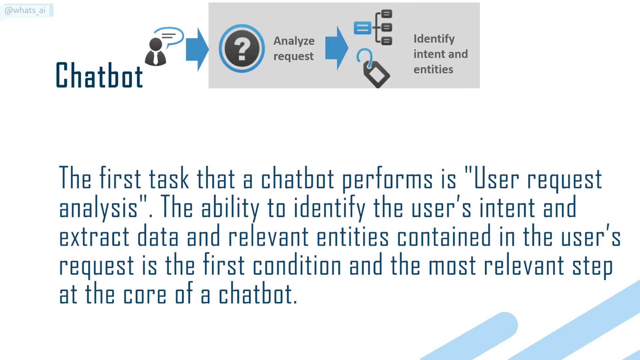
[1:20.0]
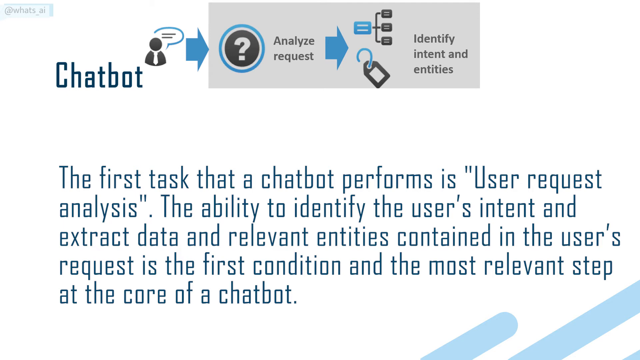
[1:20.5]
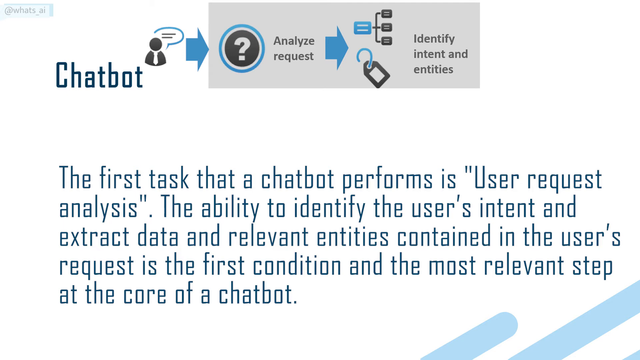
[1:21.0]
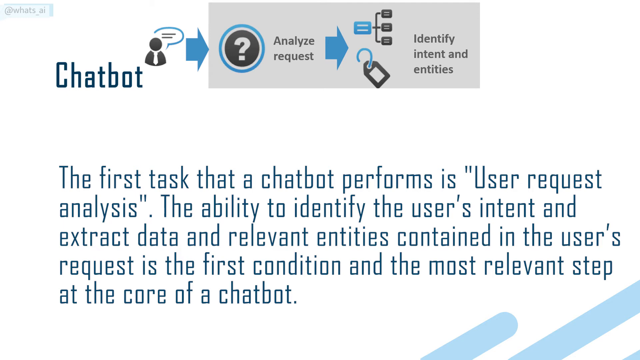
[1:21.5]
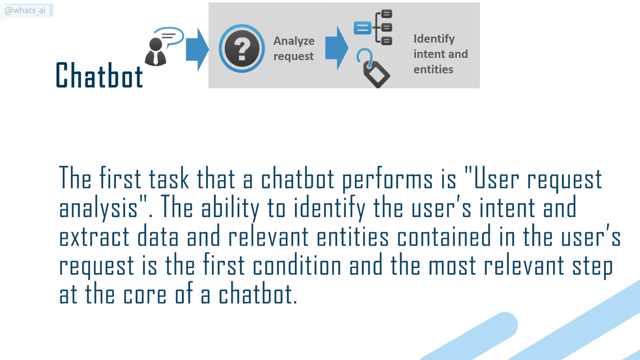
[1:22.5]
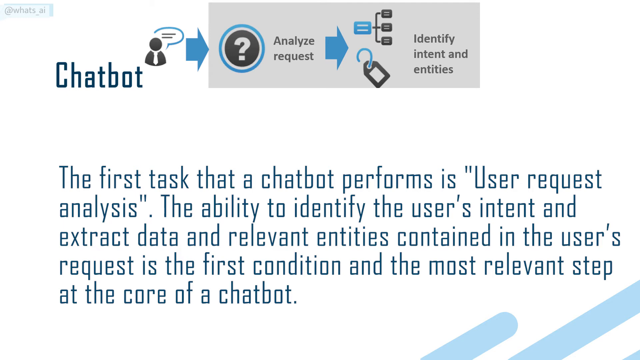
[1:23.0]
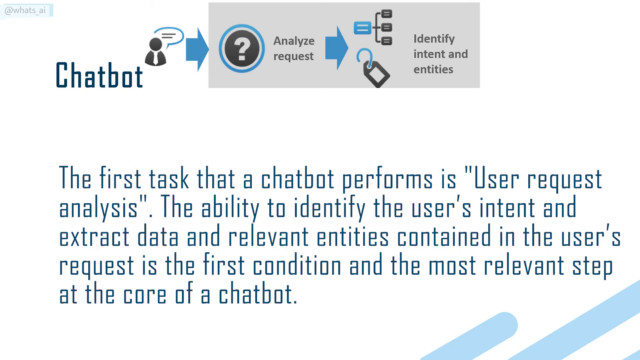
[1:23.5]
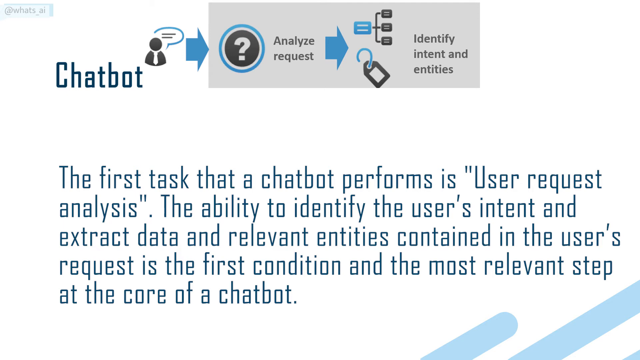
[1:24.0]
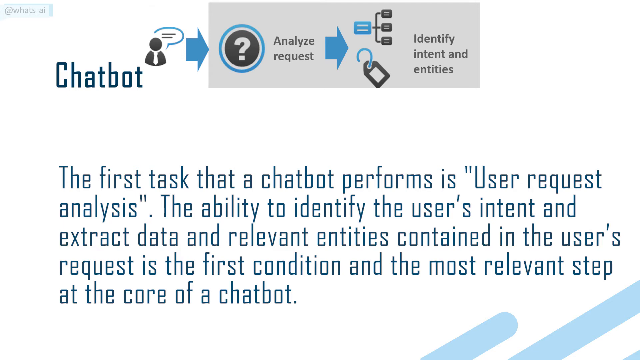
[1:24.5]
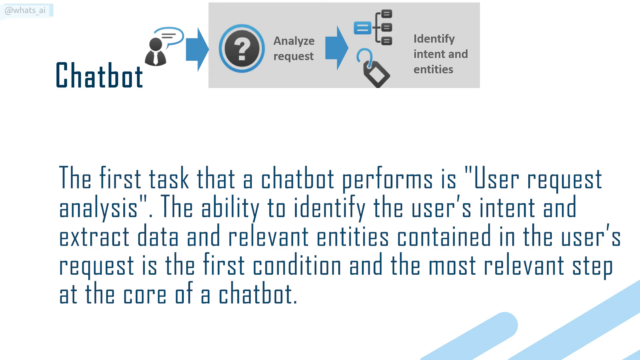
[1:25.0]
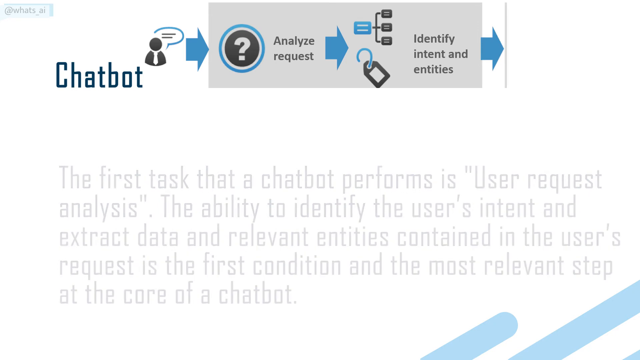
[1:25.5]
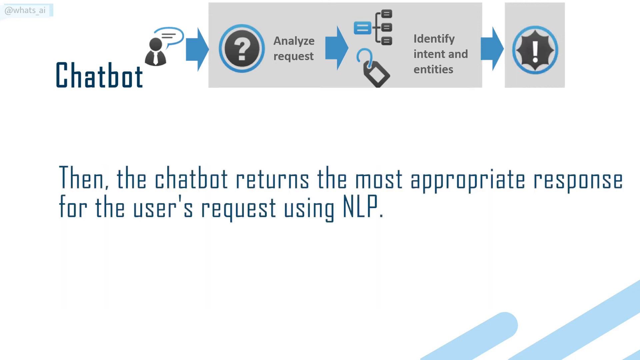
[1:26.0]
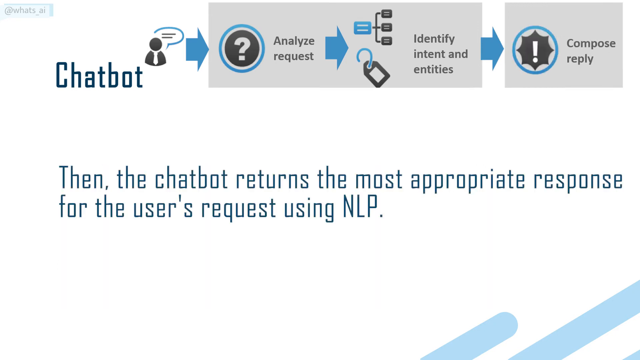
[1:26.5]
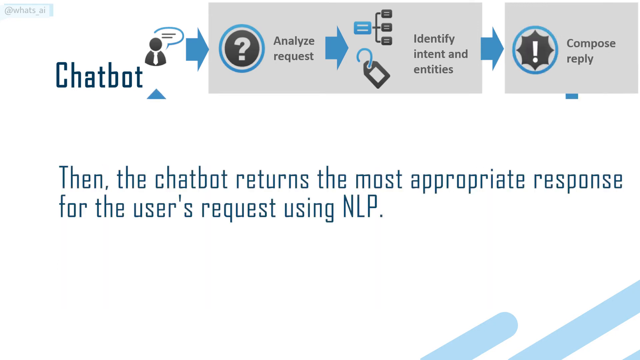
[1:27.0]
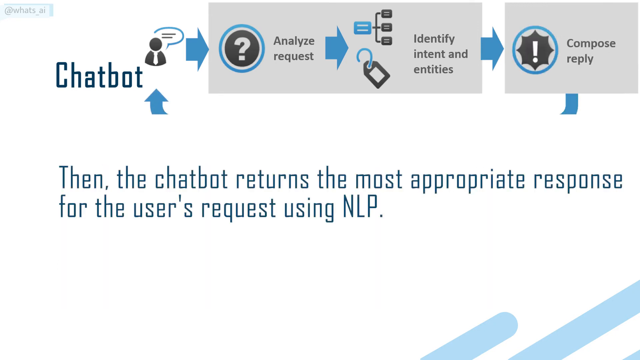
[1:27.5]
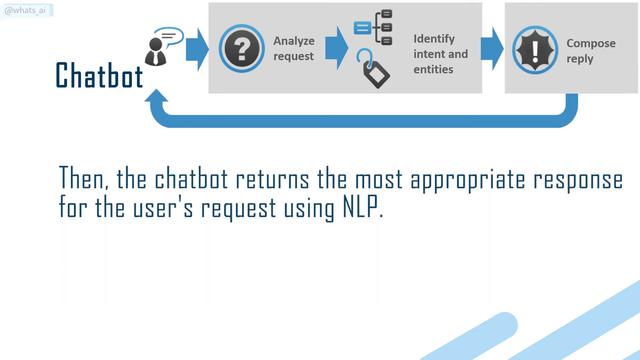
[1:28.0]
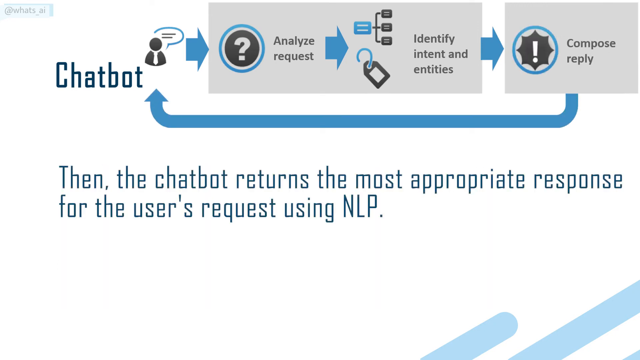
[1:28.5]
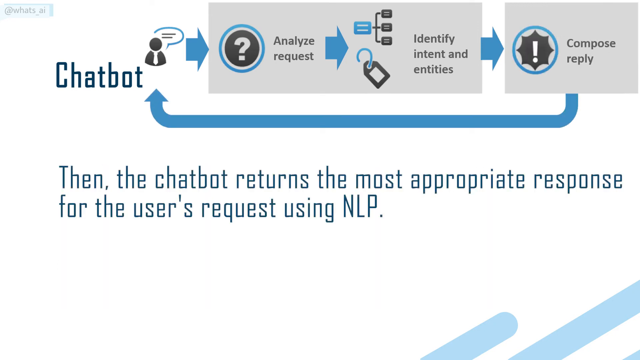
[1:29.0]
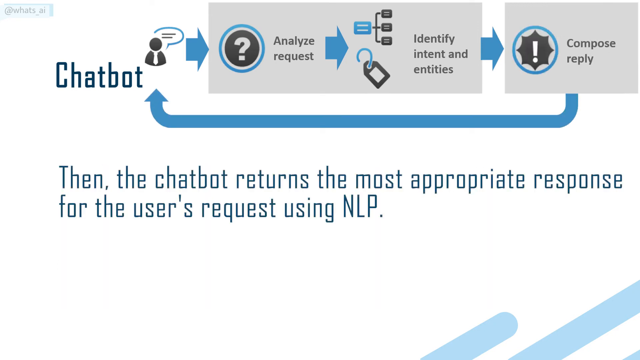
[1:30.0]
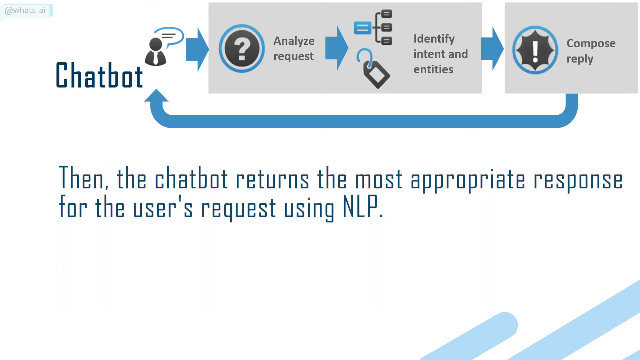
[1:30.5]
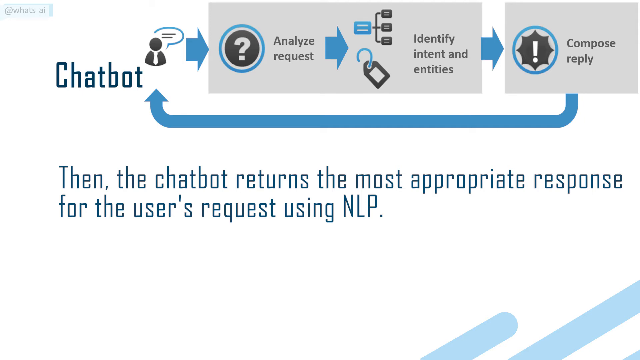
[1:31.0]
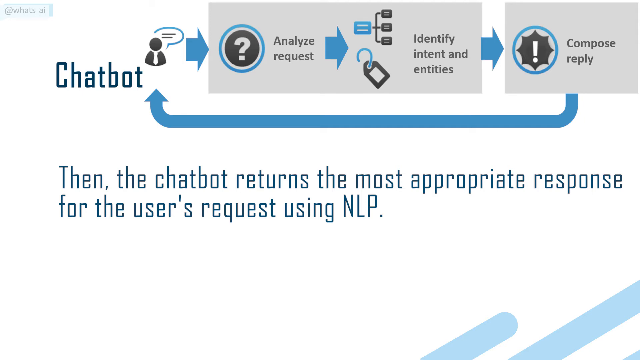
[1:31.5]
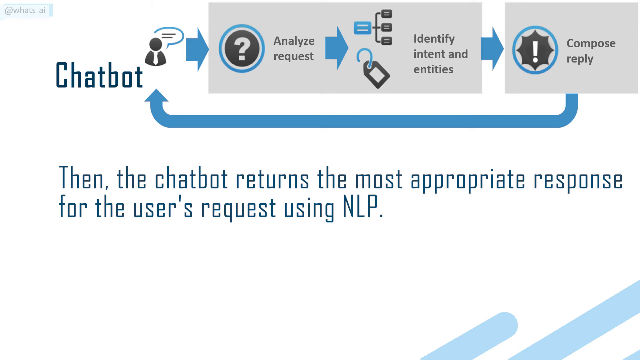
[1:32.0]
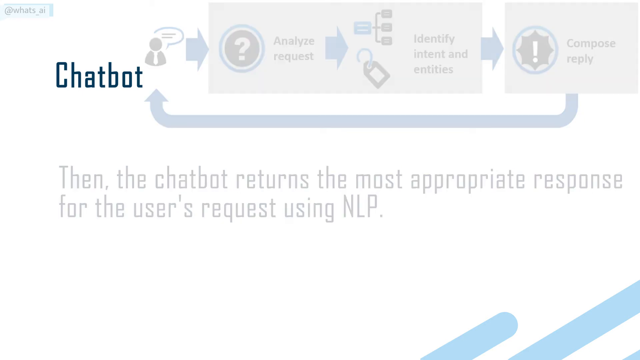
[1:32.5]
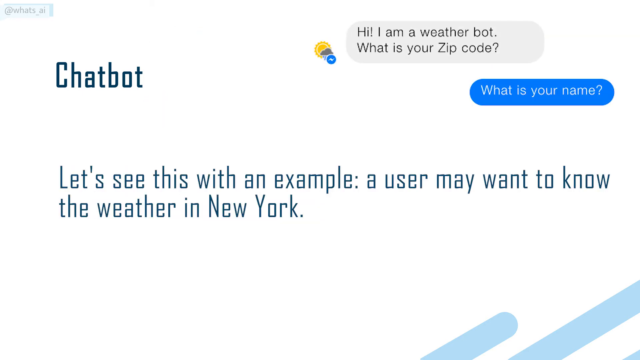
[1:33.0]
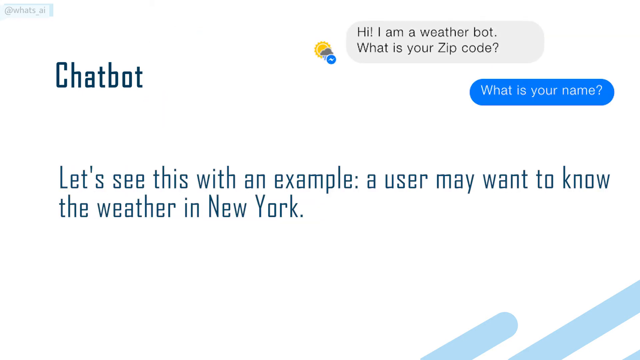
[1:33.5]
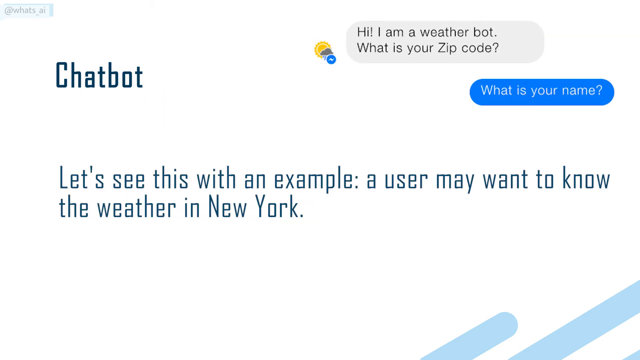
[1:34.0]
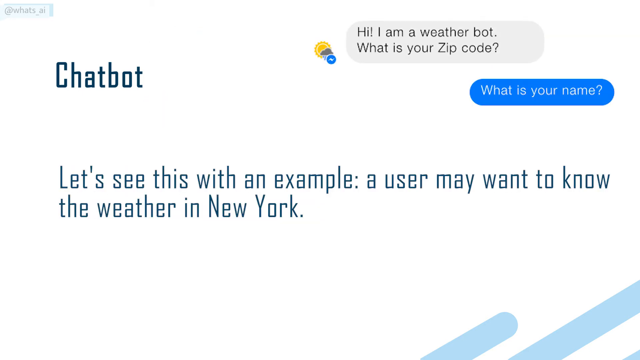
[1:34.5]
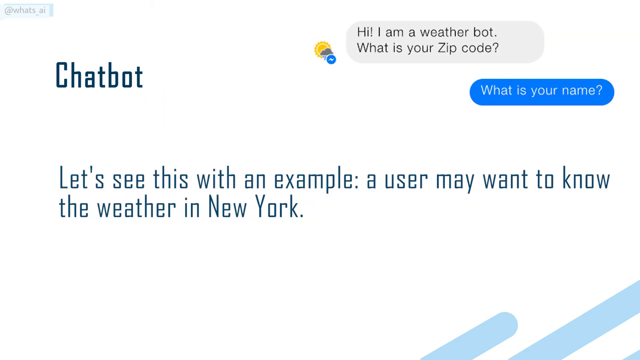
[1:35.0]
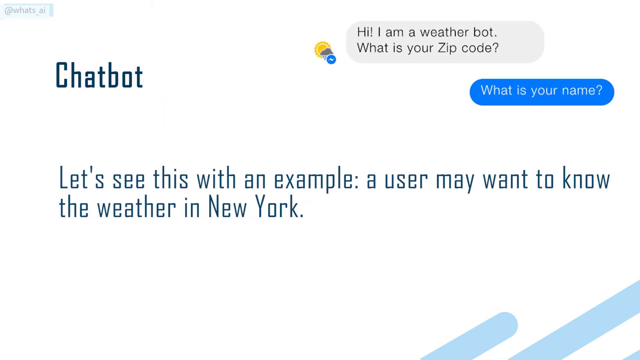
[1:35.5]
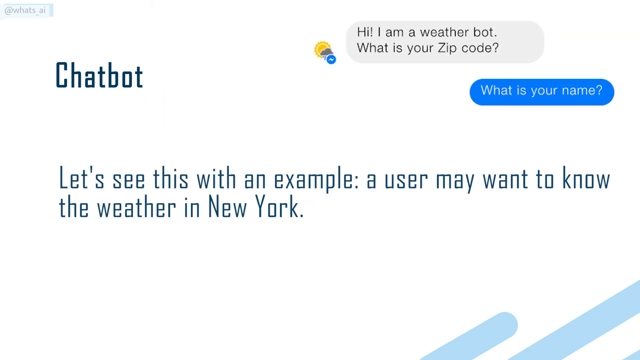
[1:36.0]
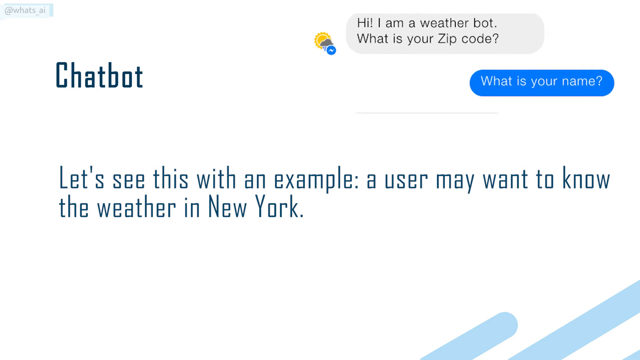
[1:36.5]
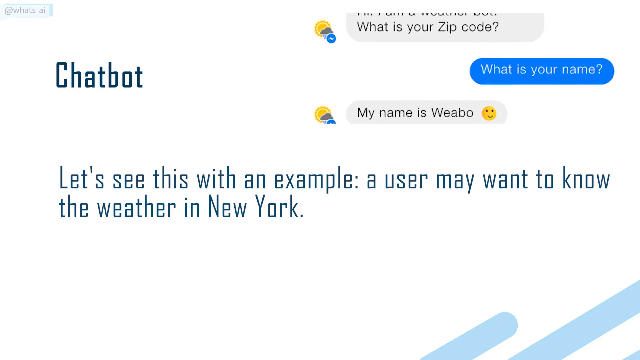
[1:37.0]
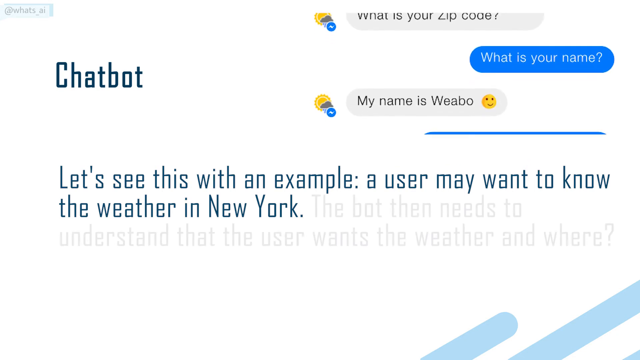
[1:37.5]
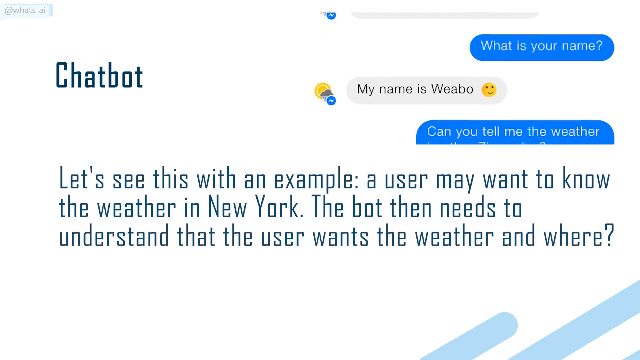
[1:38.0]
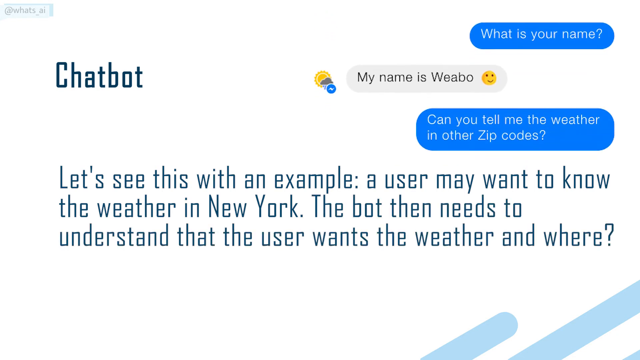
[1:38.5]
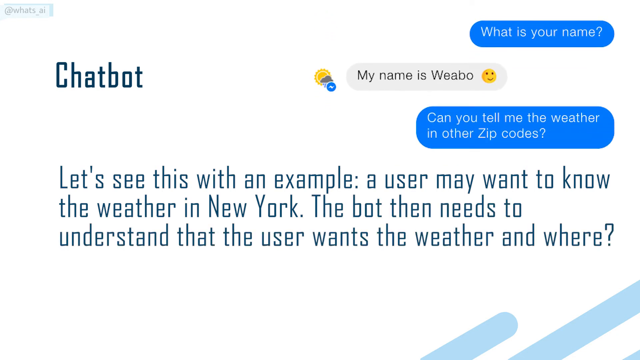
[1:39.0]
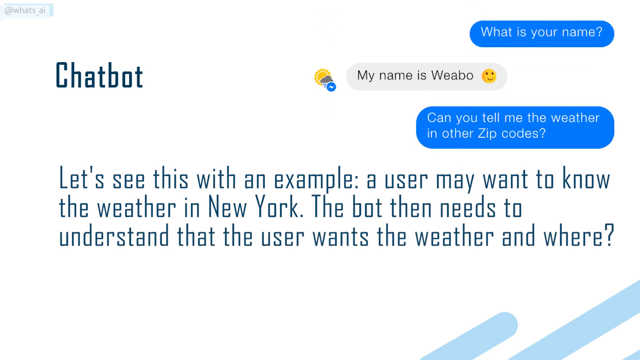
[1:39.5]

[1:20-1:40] A diagram is at the top and words at the bottom explain a process a chatbot uses: "the first task that a chatbot performs is user request analysis. The ability to identify the user's intent and extract data and relevant entities contained in the user's request is the first condition and the most relevant step at the core of a chatbot." The words change to "then the chatbot returns the most appropriate response for the user's request using NLP," and the diagram at the top changes to show composing the reply. The text then says "let's see with this example, a user may want to know the weather in New York." A conversation appears at the top; on the left it says "hi, I am a weather bot. What is your zip code?" and the user says "what is your name?" Then it says "my name is Weibo. Can you tell me the weather in other zip codes?"